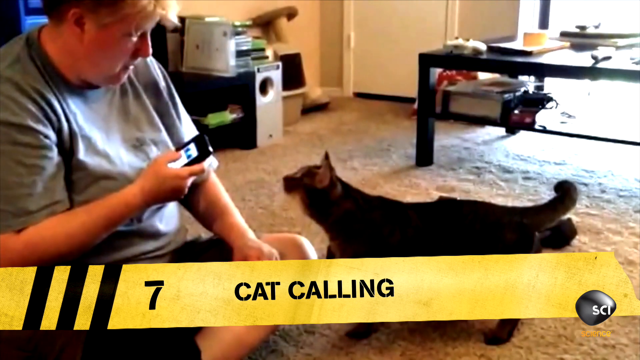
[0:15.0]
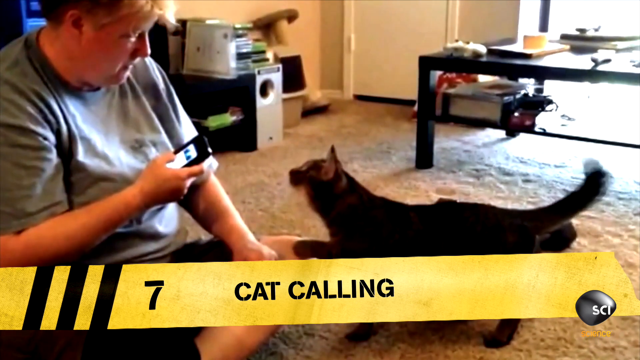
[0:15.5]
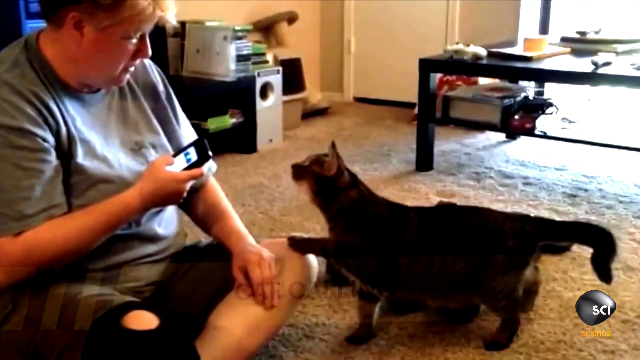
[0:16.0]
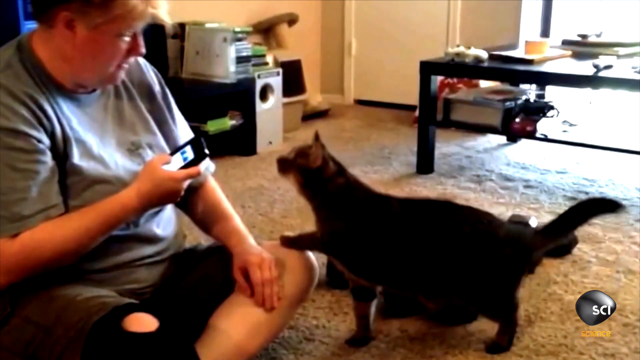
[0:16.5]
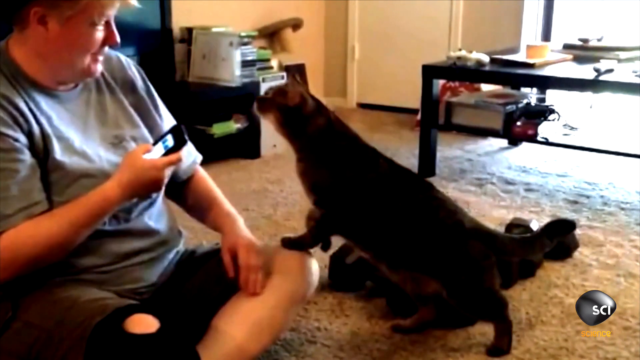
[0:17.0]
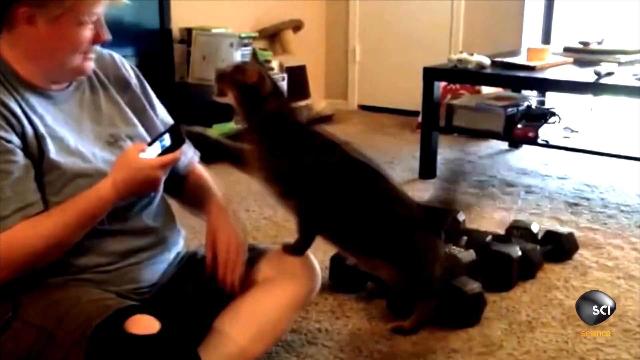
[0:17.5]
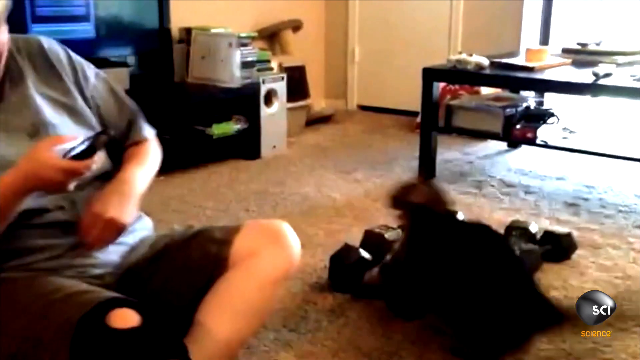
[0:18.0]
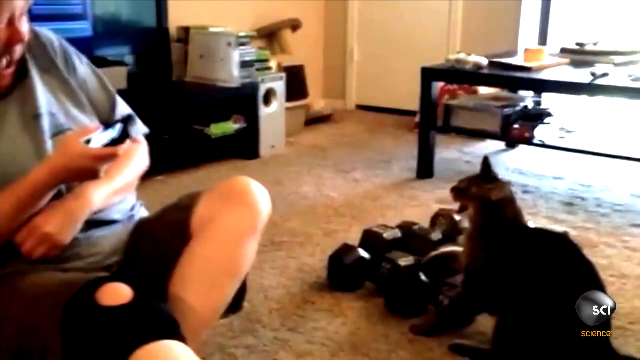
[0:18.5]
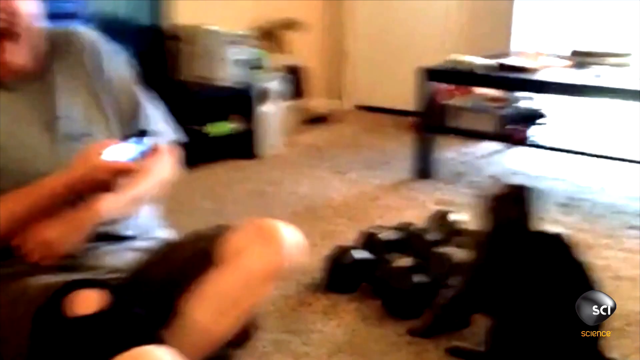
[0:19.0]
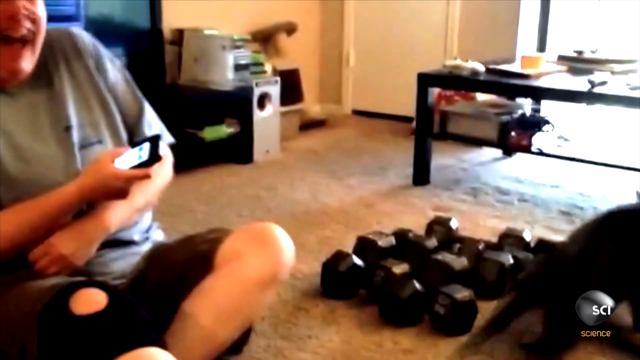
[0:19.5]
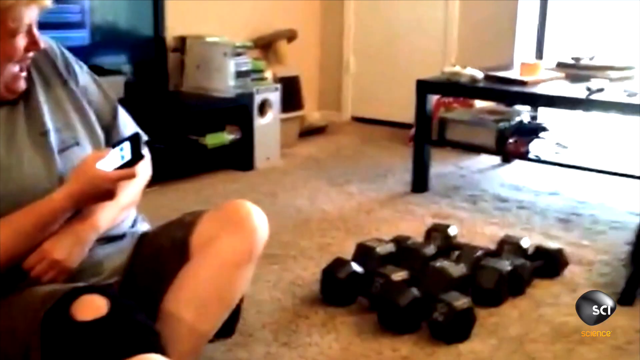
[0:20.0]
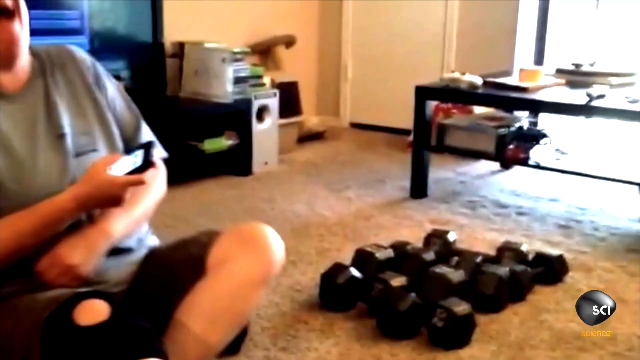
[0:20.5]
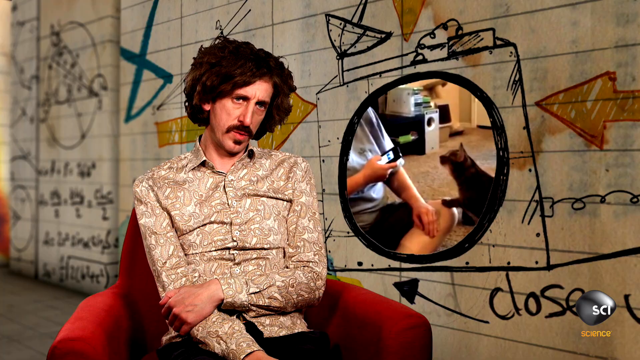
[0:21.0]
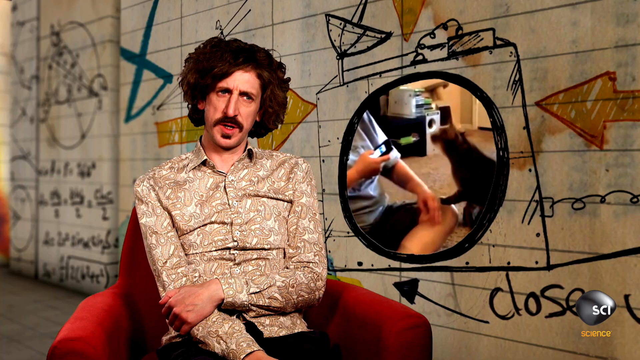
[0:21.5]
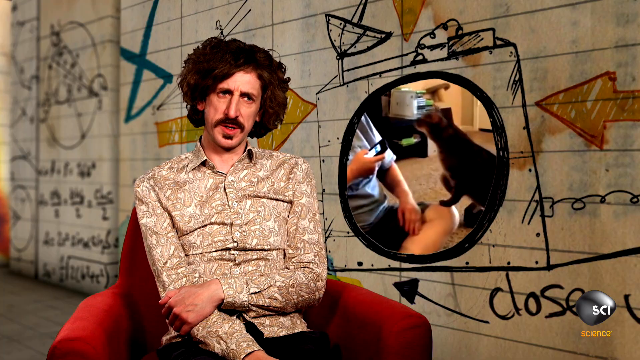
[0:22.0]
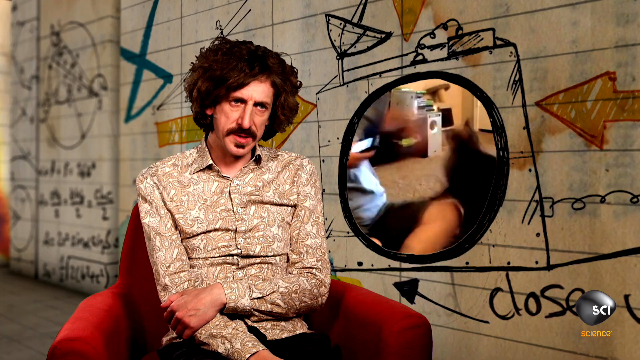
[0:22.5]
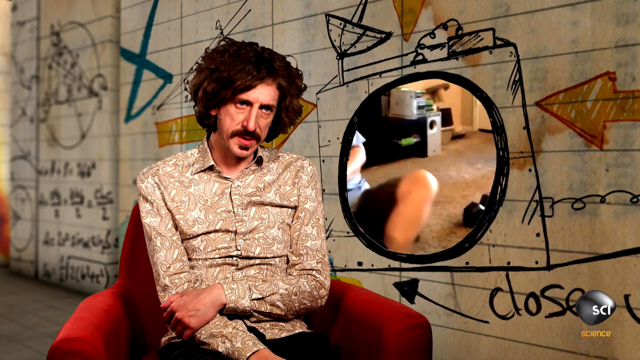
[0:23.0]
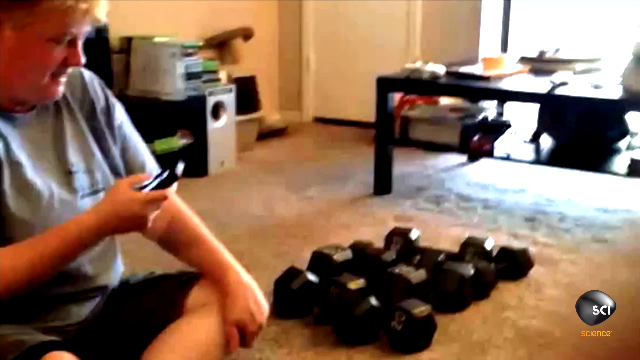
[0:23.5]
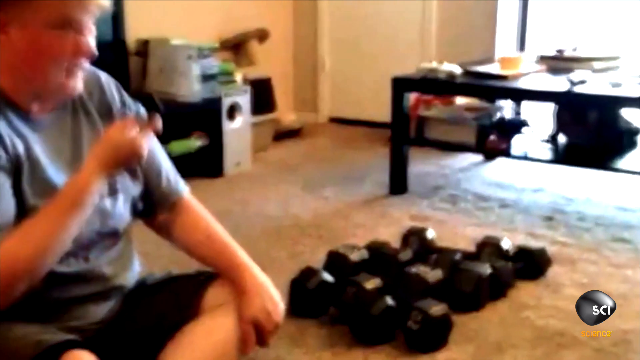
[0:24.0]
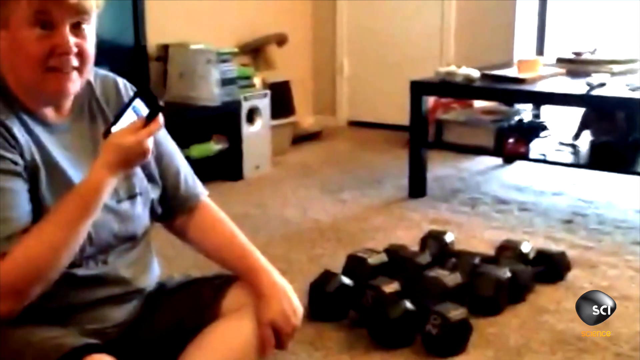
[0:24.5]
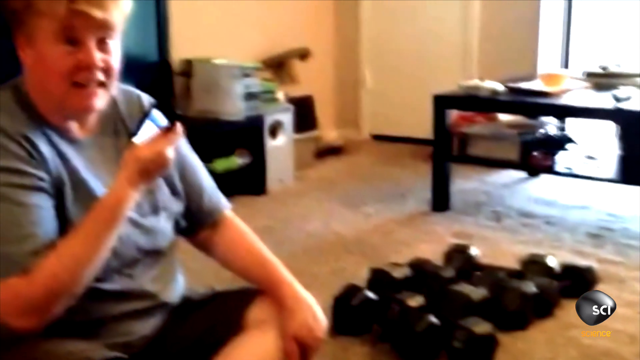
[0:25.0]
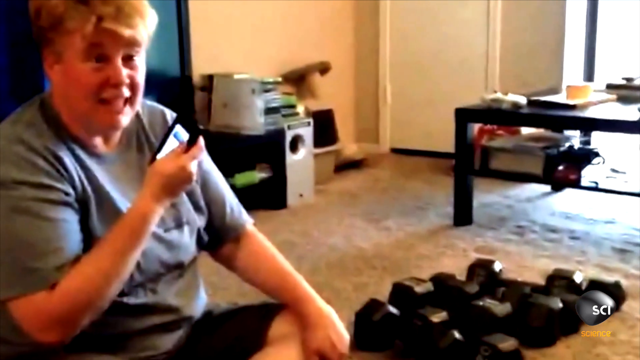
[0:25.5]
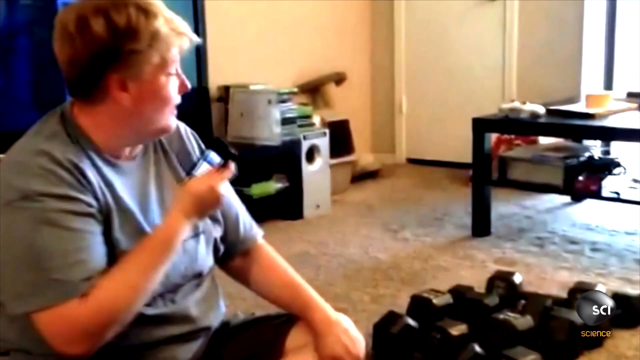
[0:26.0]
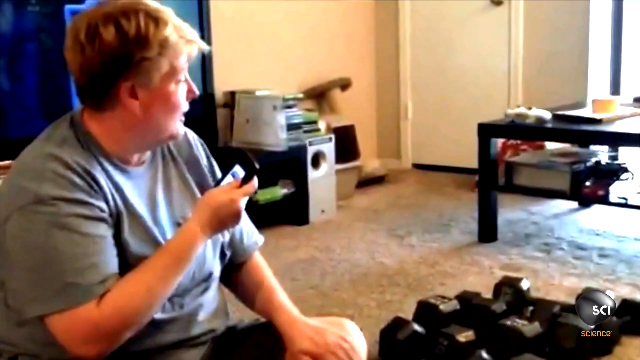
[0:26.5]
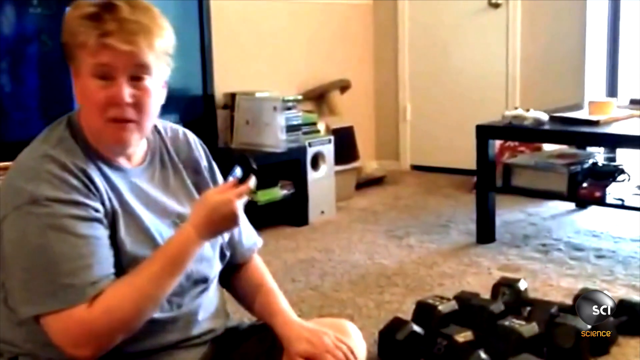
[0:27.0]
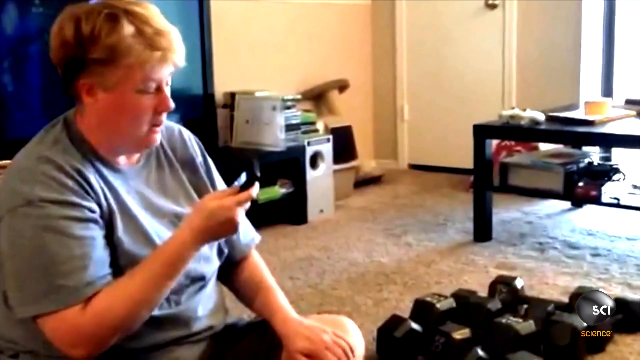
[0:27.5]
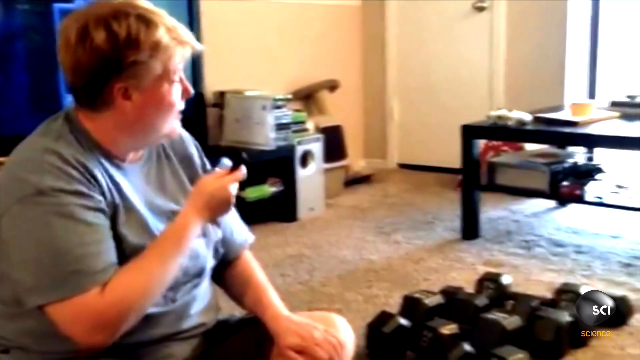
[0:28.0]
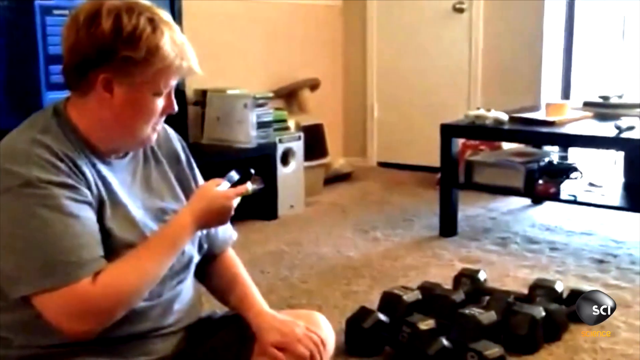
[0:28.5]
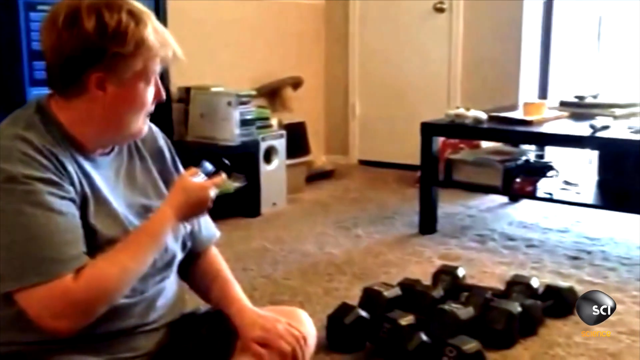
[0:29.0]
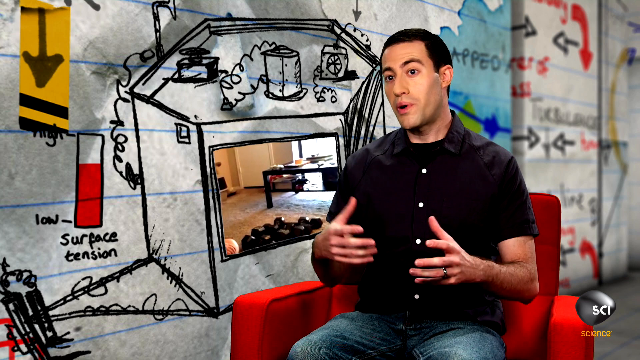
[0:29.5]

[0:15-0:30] The cat approaches its owner, puts its front paws on her knee, and appears to slowly climb up and get into her space a little. The woman looks a little uneasy as she stares down at the cat. The cat reaches its paw out and swipes at her; she blocks it with her arm, and the cat begins hissing and runs away. The woman sits there laughing. The video cuts to commentary from a man with dark brown curly hair, a dark brown mustache and a small patch of facial hair under his lip, wearing a tan and white button-down shirt and sitting on a red chair. He appears a little unhappy with the video. It then cuts back to the footage, where the woman sits in the lower left corner of the screen, holding her phone toward the person recording her. She appears to be talking to the cameraman, and several small black barbells are in front of her. She appears to be talking and activating the app as she is recorded. The video then cuts to another commentator, who also has short dark brown hair, as well as dark brown eyes.